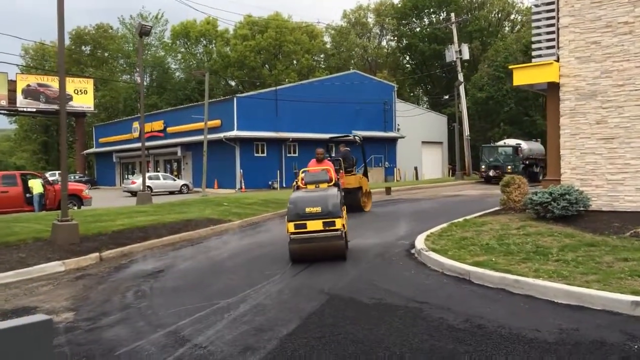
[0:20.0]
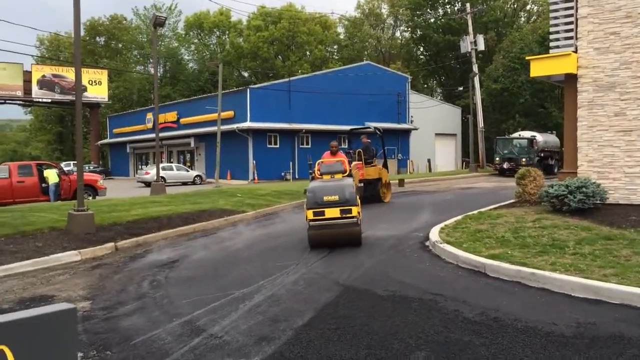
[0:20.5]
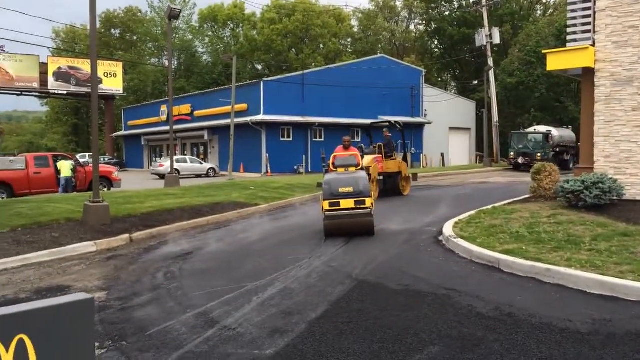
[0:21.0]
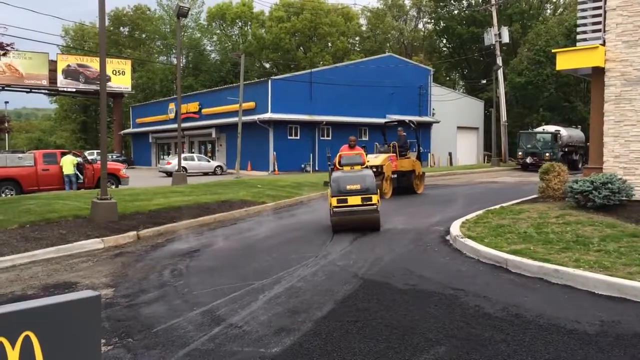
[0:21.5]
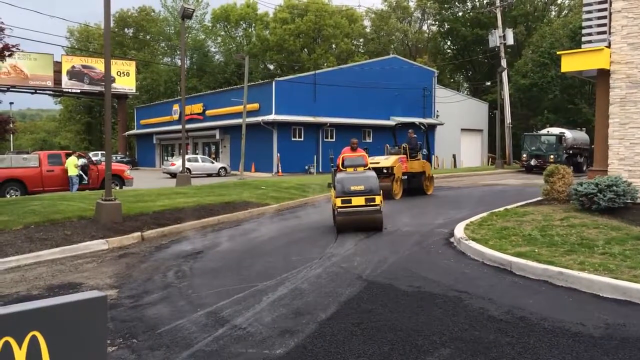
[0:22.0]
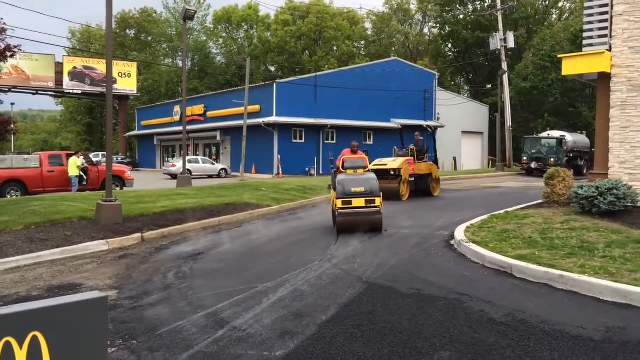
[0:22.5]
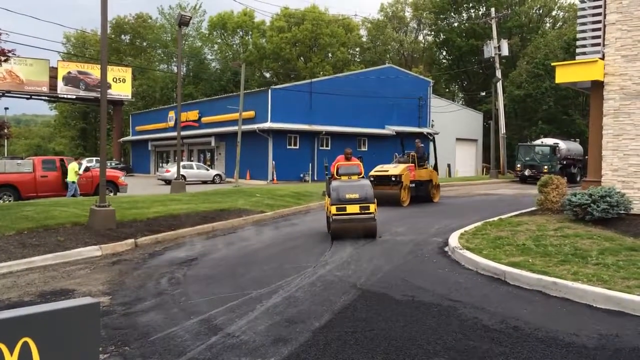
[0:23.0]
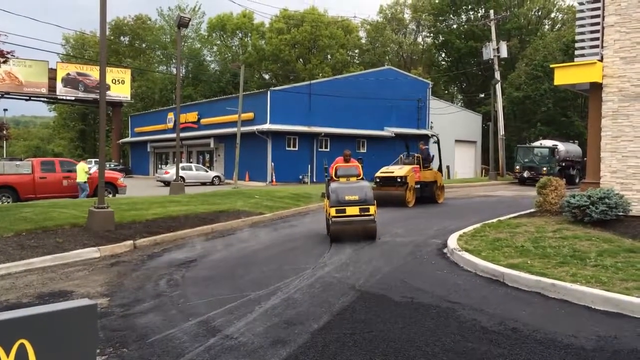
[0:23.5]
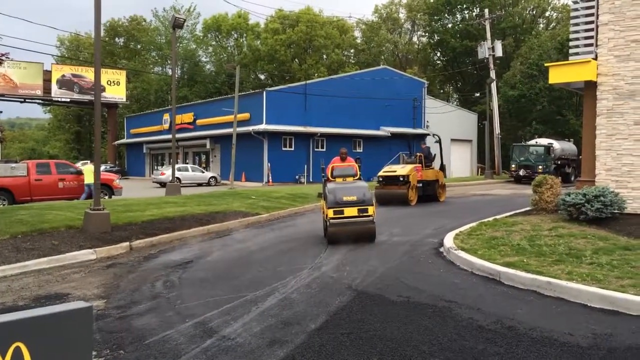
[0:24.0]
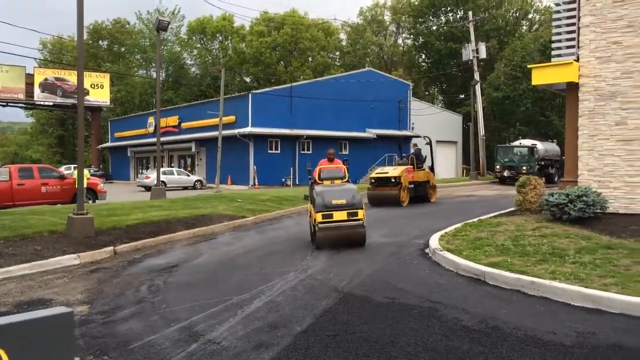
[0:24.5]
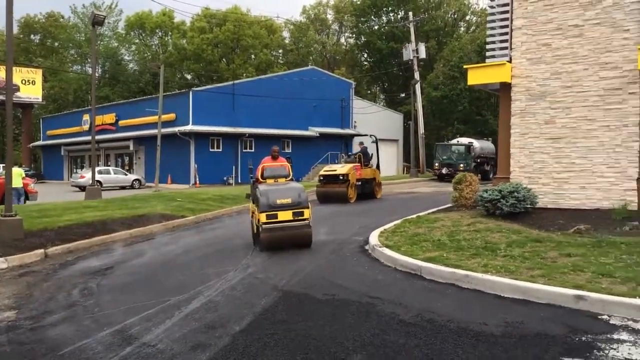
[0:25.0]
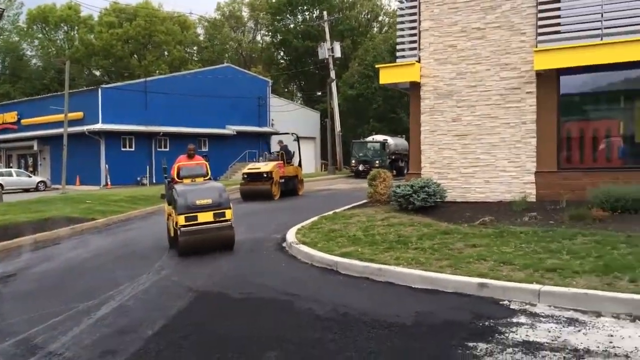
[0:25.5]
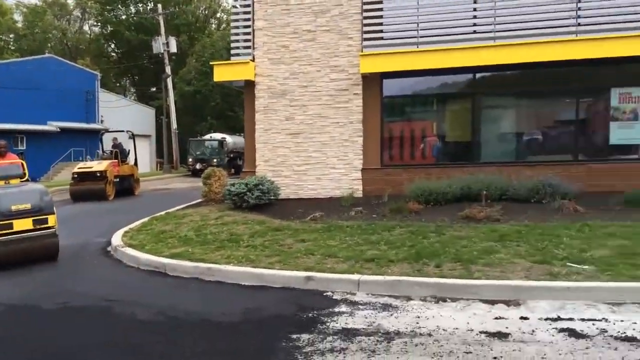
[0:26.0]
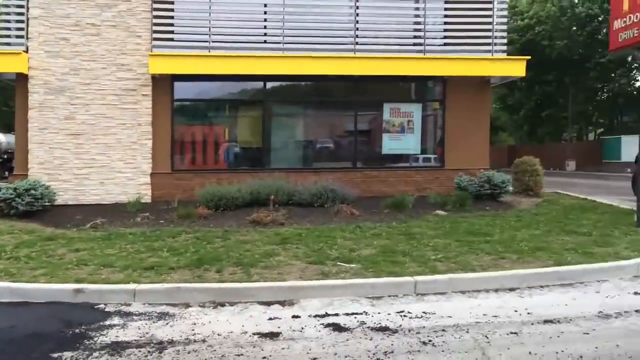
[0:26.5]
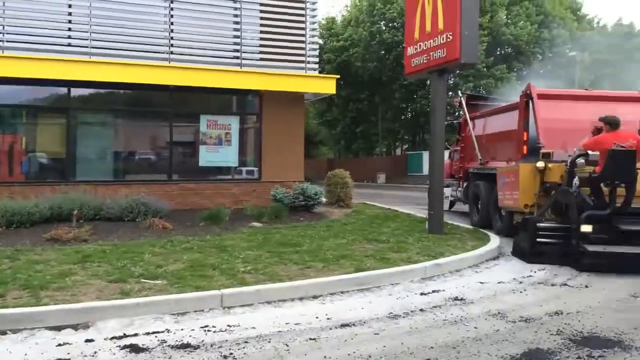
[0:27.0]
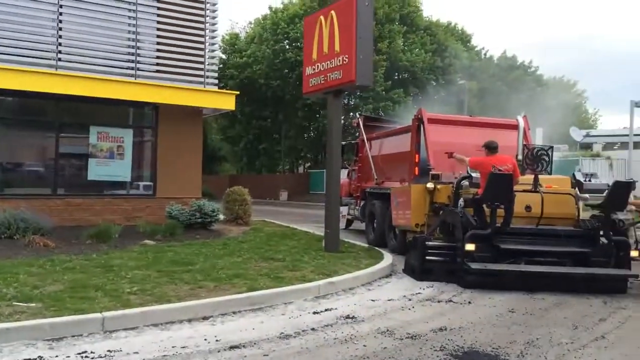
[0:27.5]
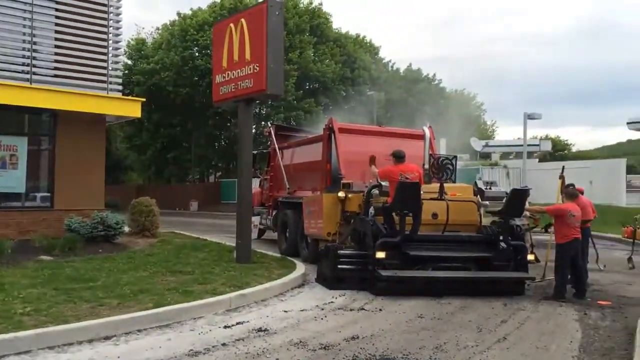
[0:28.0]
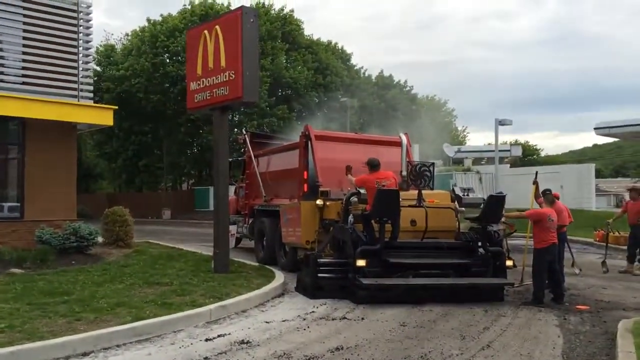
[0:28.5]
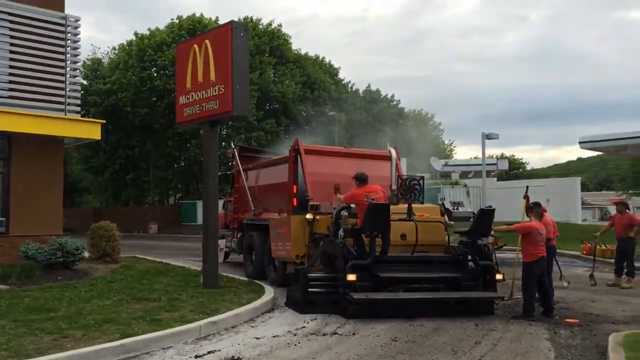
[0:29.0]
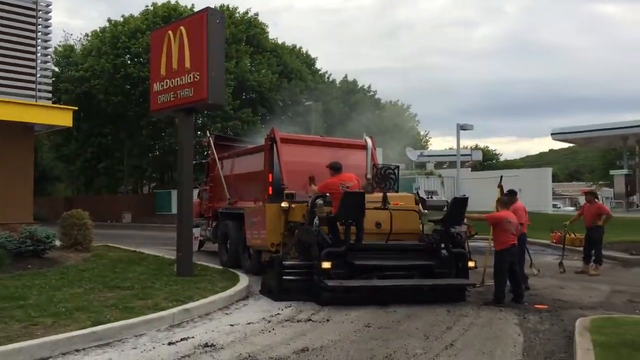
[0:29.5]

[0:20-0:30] The two men reverse the steamrollers. The shot cuts to the other side of the building, where it is clearly a McDonald's, with the sign in front of the building much clearer. Some other men stand around a piece of machinery that looks like another vehicle, probably also working on the road. A man seated in one of the machines seems to be talking to his colleagues, perhaps giving instructions. Four other men stand on the right-hand side of the screen, so altogether there seem to be six men walking on the site.